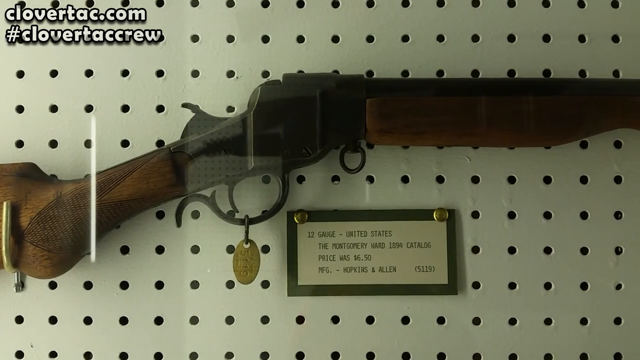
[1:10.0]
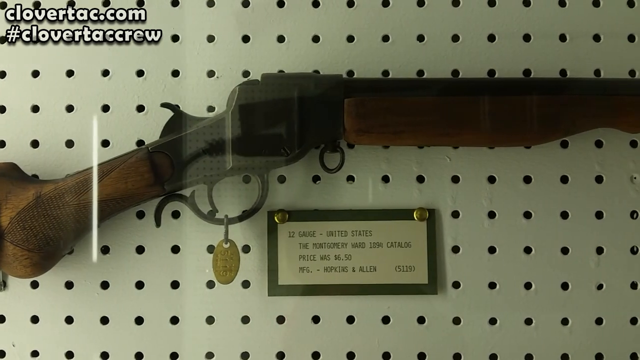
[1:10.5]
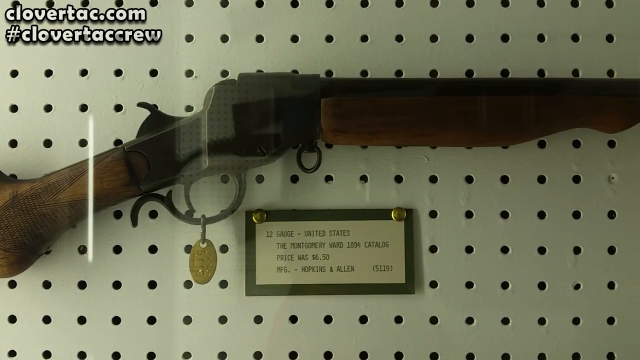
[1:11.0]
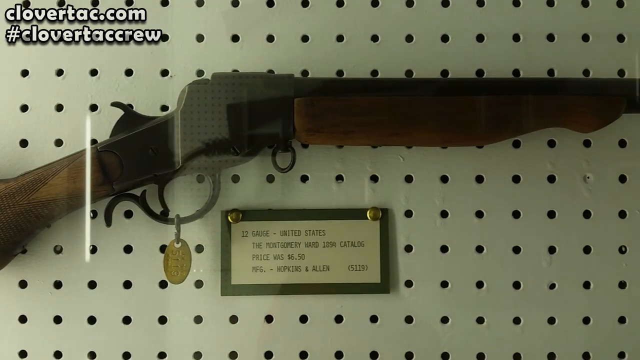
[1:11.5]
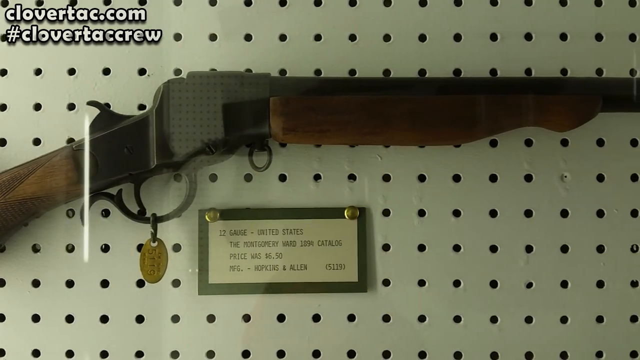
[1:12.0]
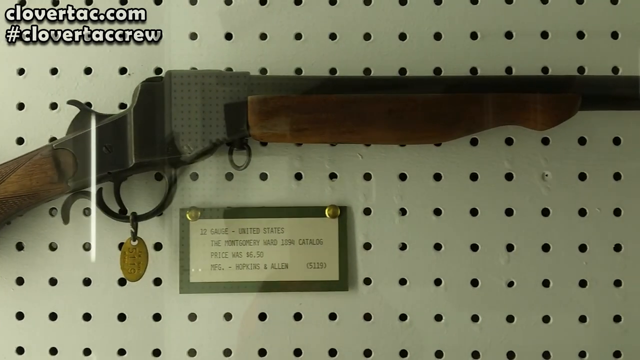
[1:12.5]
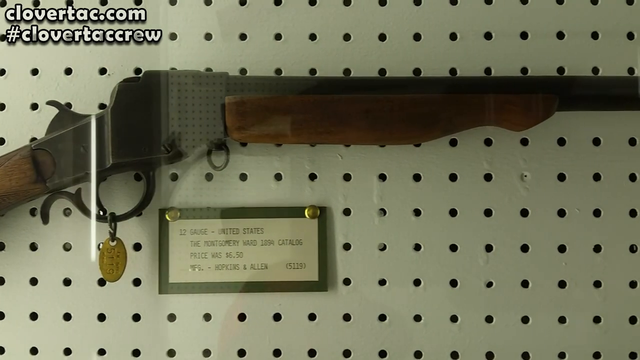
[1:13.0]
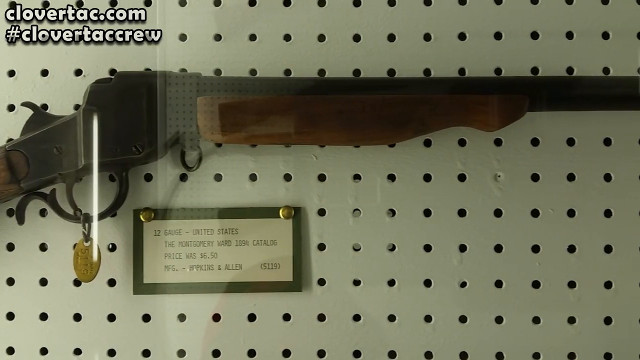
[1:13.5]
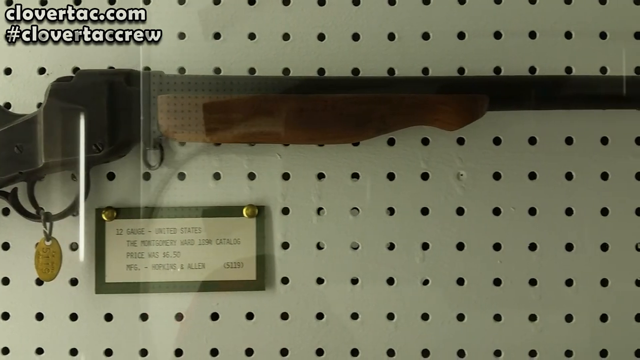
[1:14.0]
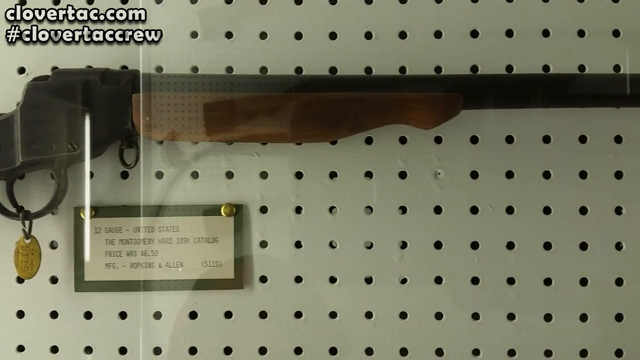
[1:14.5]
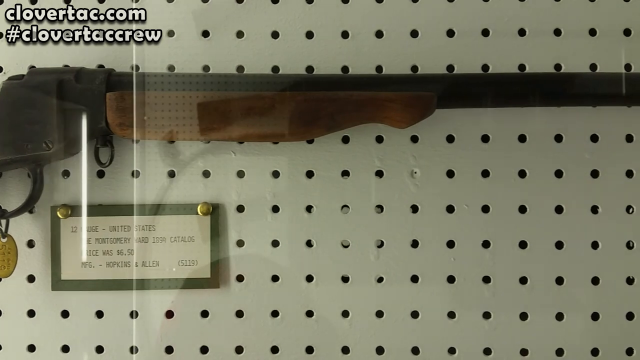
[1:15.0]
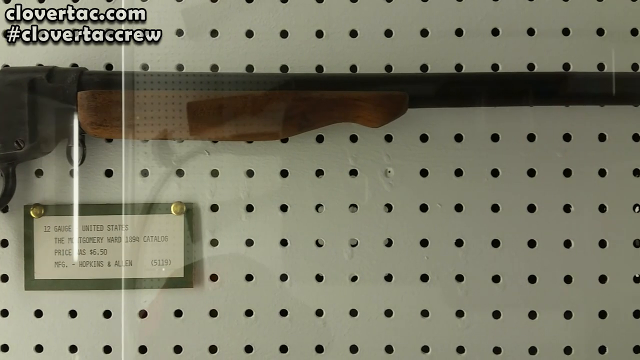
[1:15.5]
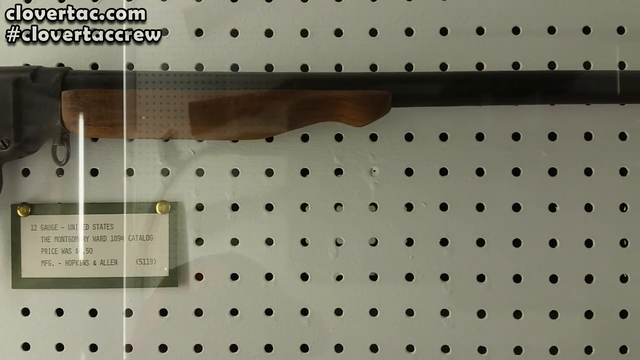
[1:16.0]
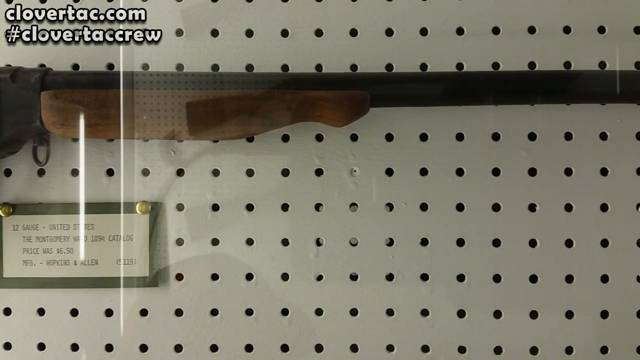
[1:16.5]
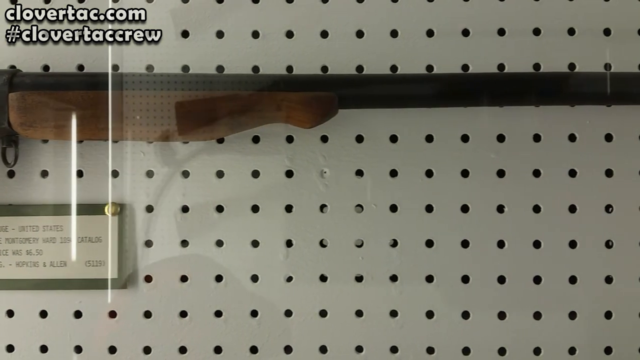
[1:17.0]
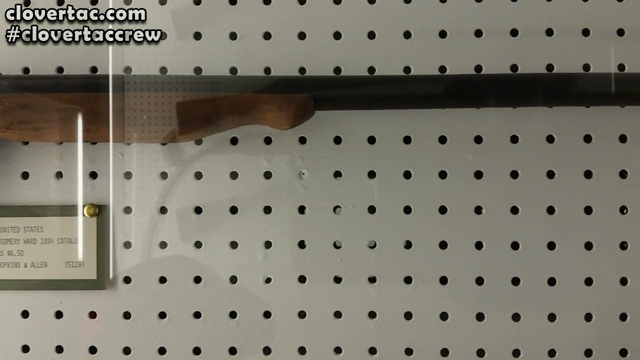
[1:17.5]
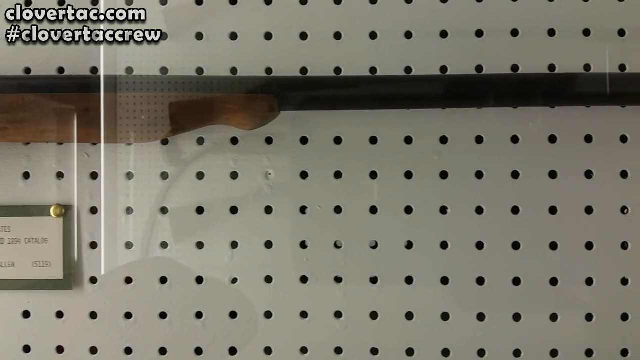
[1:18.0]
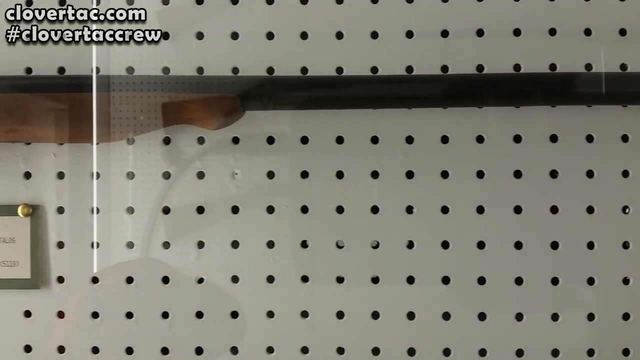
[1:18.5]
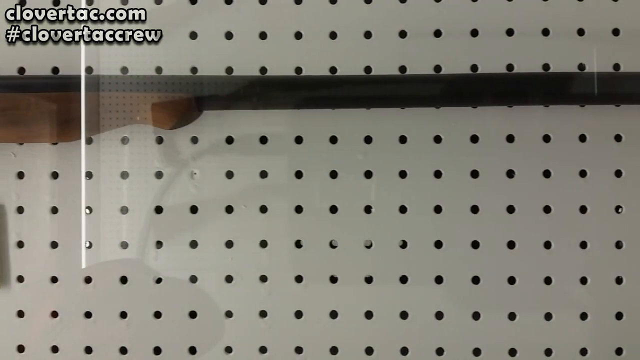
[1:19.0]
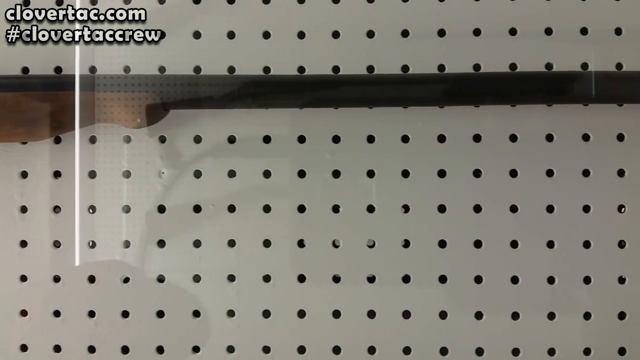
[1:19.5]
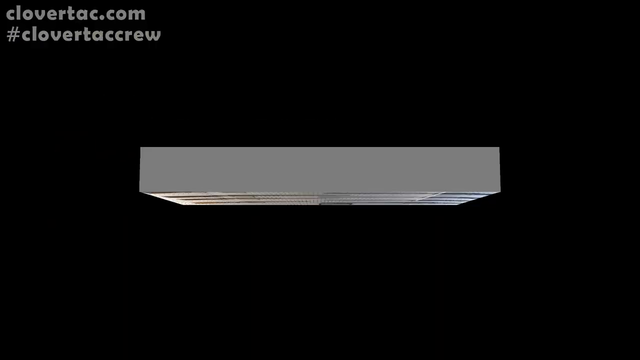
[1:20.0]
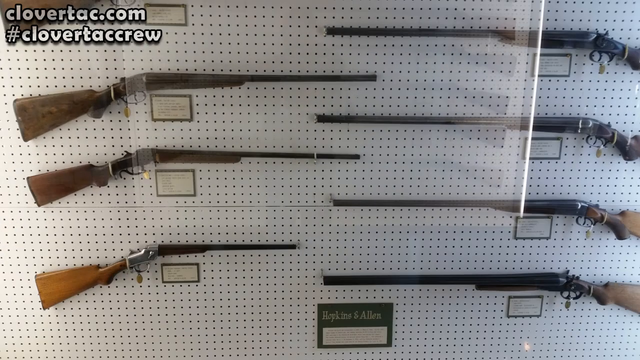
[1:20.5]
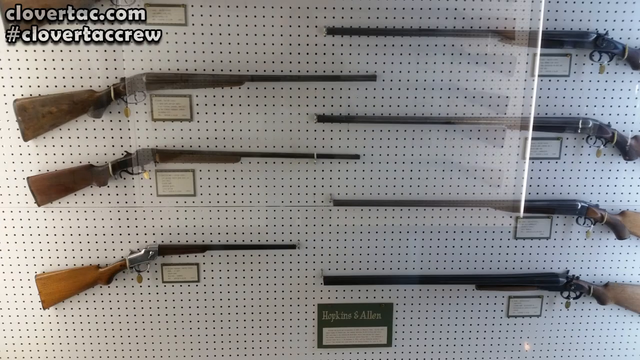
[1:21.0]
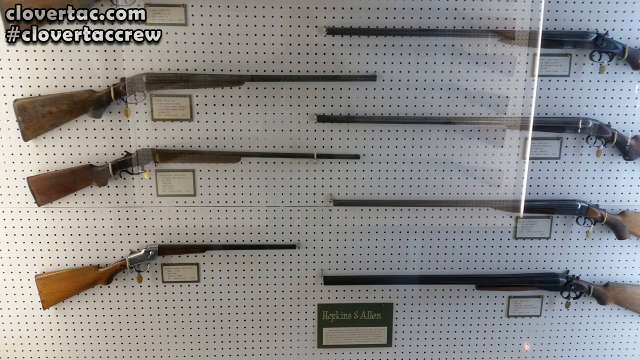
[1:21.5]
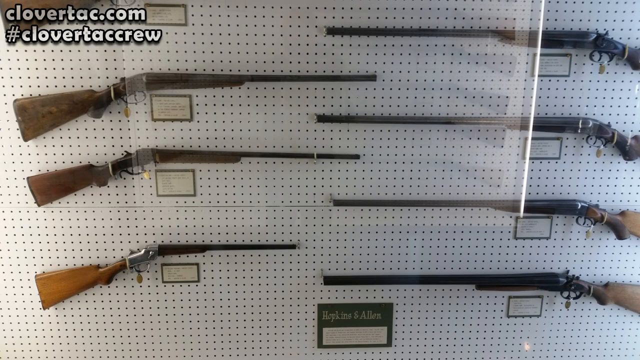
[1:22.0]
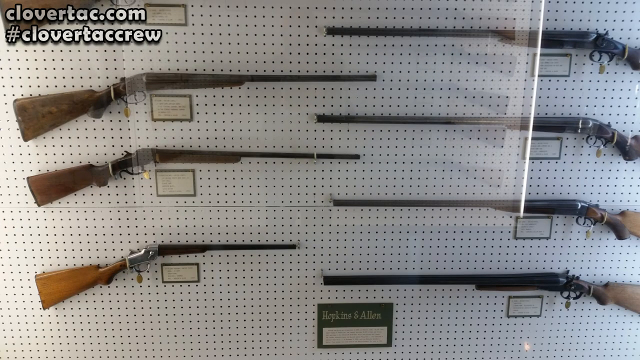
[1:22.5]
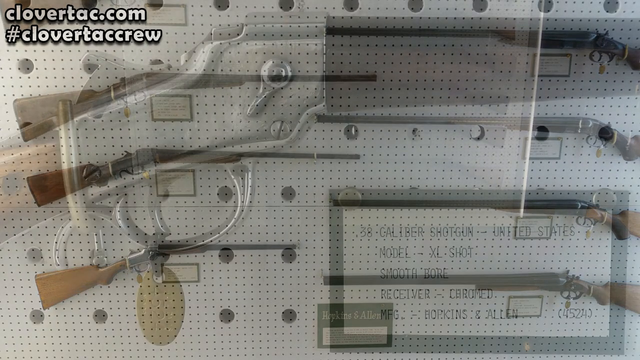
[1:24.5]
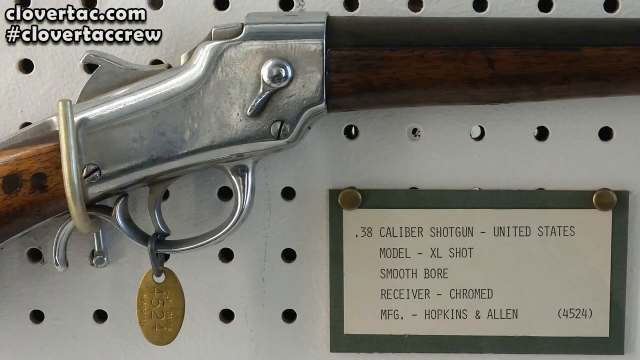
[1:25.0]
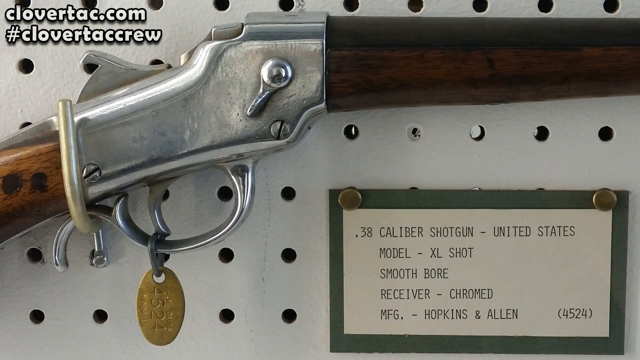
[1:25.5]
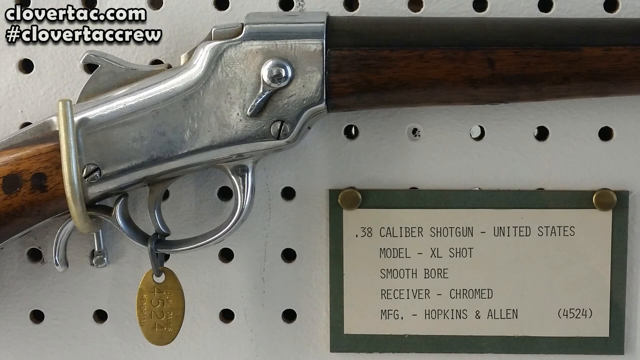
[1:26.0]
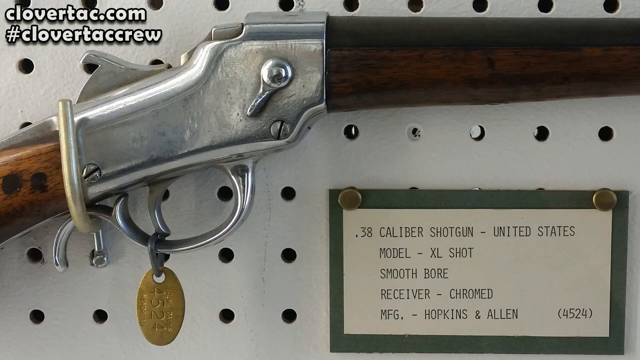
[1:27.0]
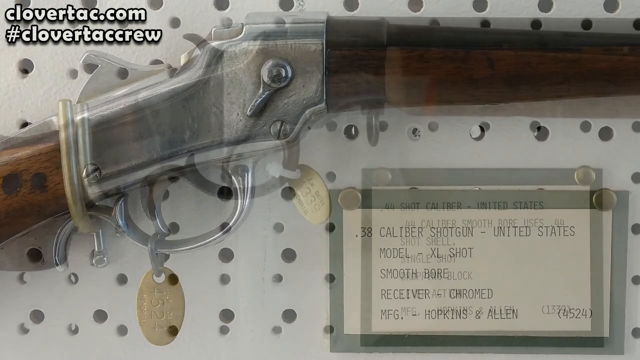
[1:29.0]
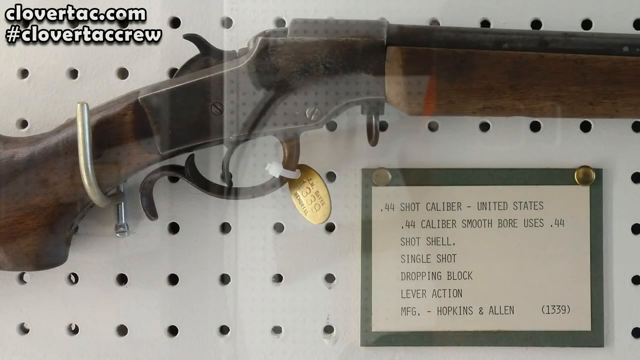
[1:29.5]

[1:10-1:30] The same shotgun, a 12-gauge, continues to be shown. It has a tag, which looks like a gold tag, hanging right next to the trigger. The gun is very zoomed in on, so only parts of the shotgun and the background wall are visible as the camera slowly travels to the right to bring the entire gun into frame little by little. This gun has a very long barrel. Next is an image of seven shotguns placed one on top of another, three on the left side of the wall and four on the right side, with a card underneath each shotgun giving information about the gun. Then a very zoomed-in view shows one of the shotguns right where the trigger is, with text reading "38-caliber shotgun, United States, model XL-SHOT, smooth bore, receiver chromed, MFG Hopkins & Allen (4524)."